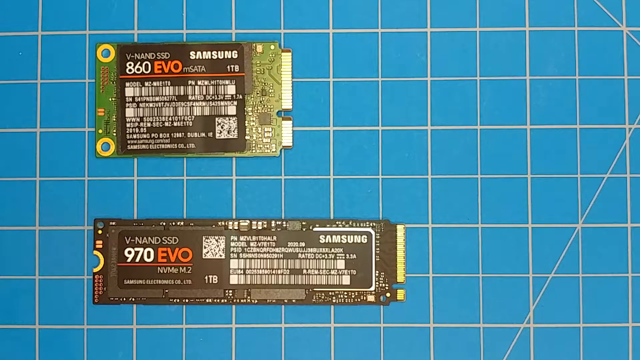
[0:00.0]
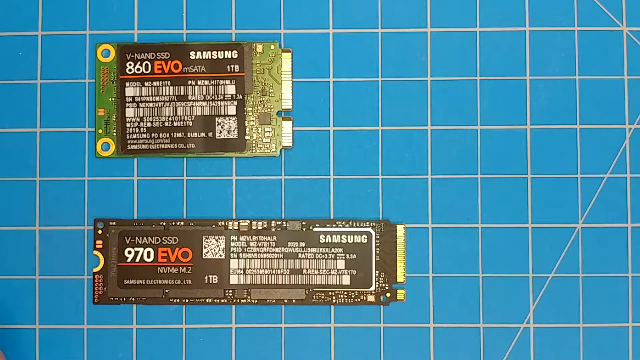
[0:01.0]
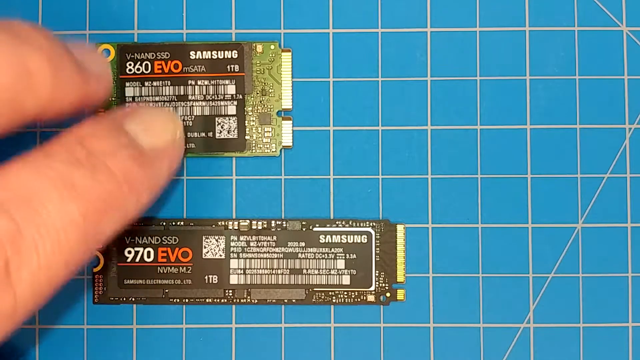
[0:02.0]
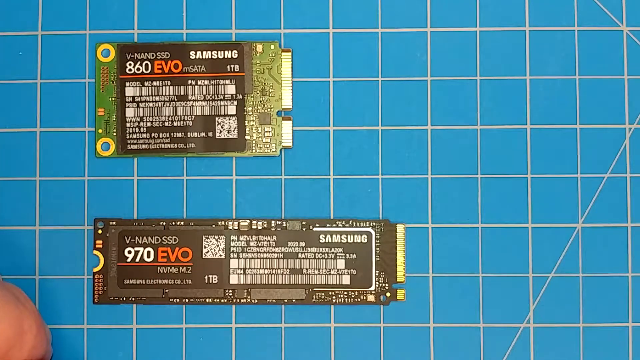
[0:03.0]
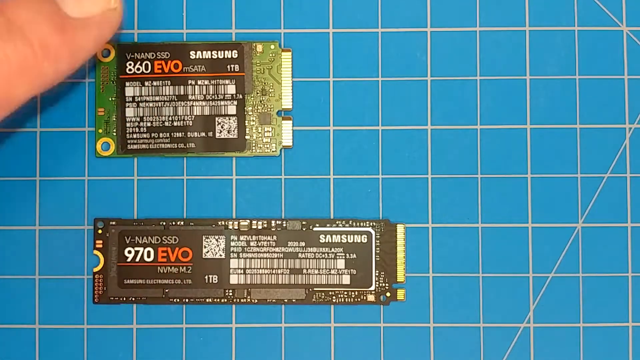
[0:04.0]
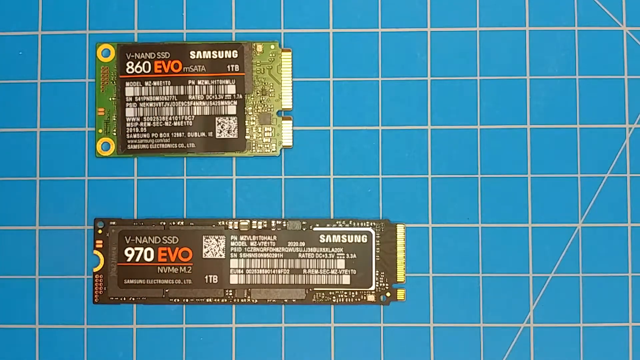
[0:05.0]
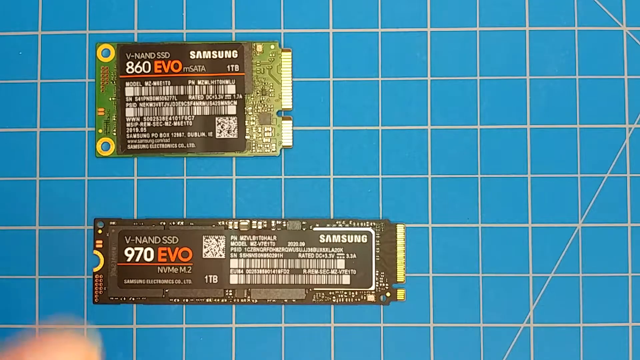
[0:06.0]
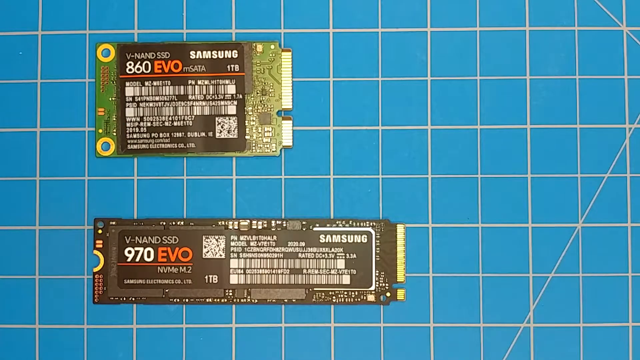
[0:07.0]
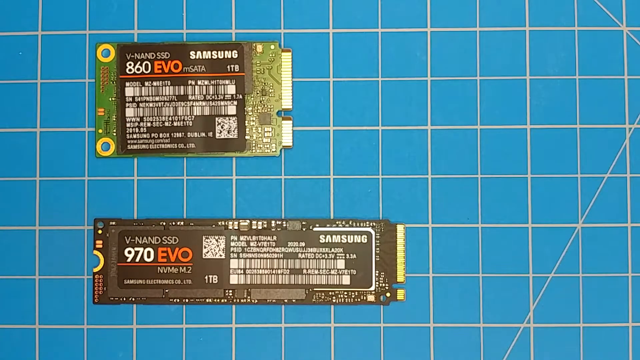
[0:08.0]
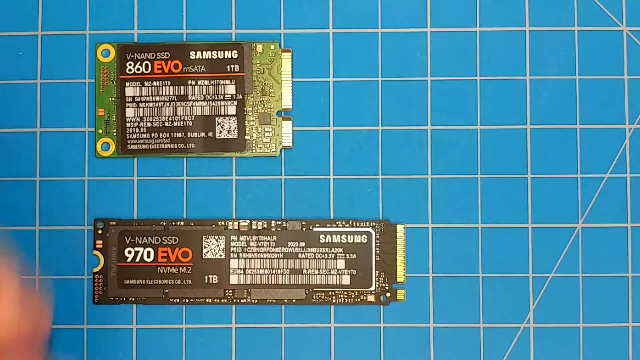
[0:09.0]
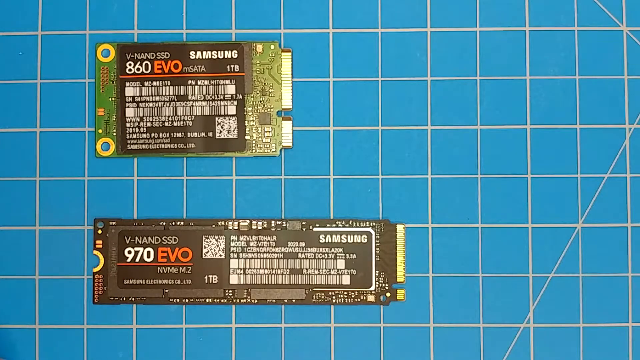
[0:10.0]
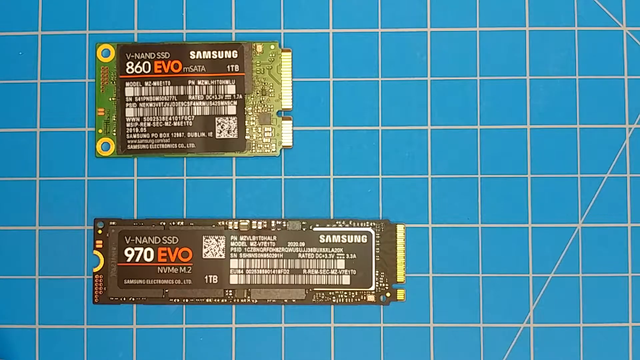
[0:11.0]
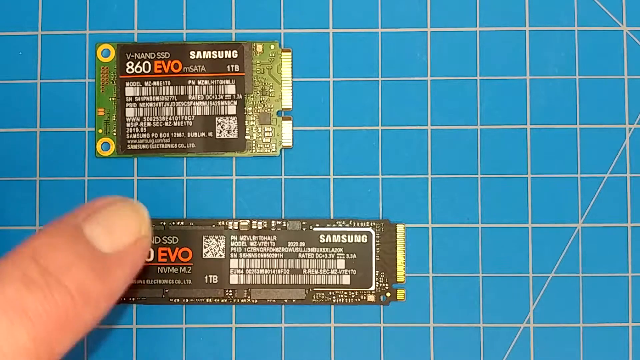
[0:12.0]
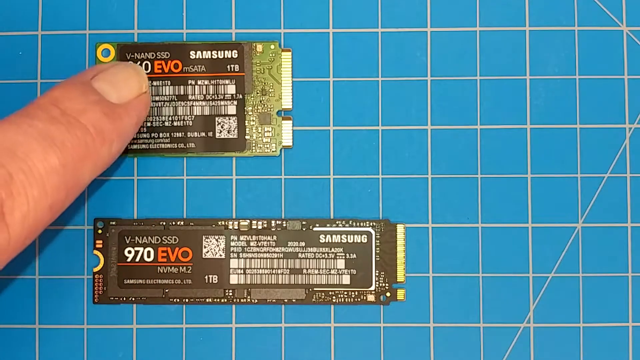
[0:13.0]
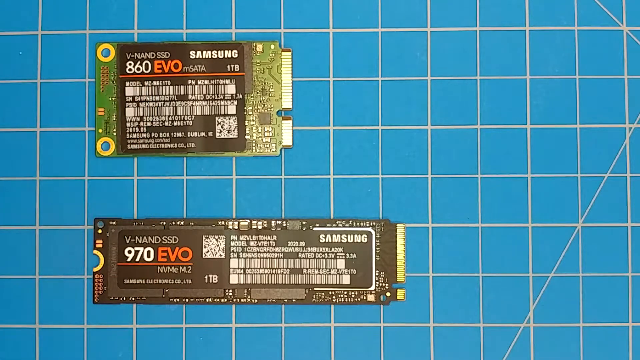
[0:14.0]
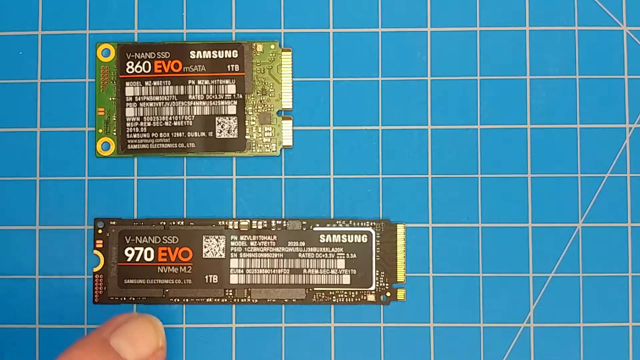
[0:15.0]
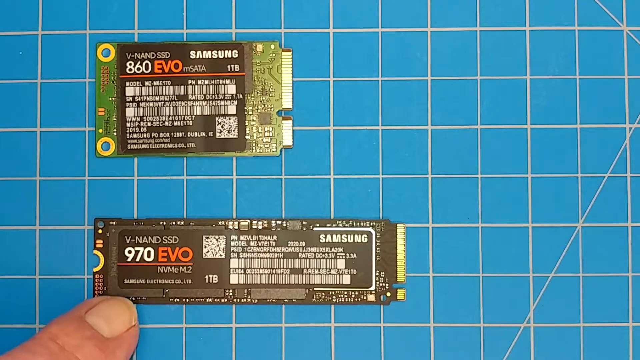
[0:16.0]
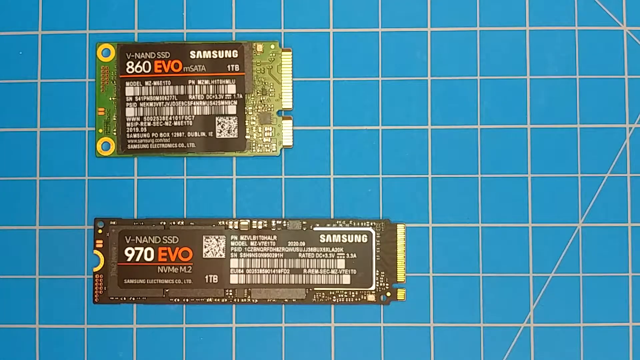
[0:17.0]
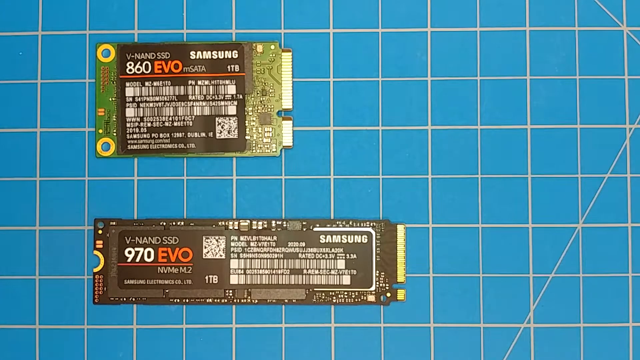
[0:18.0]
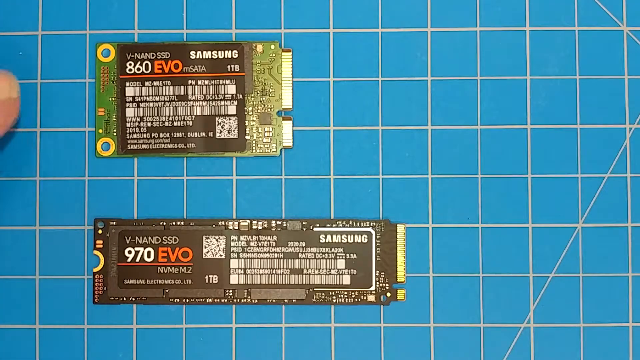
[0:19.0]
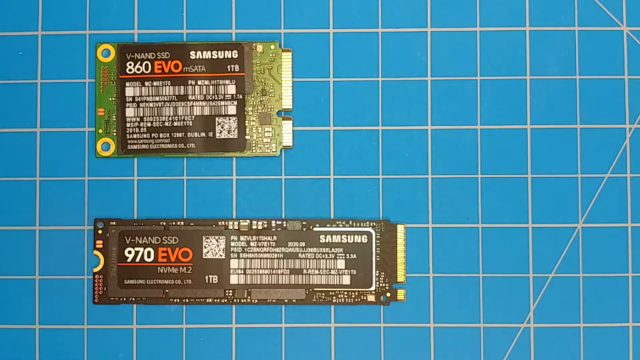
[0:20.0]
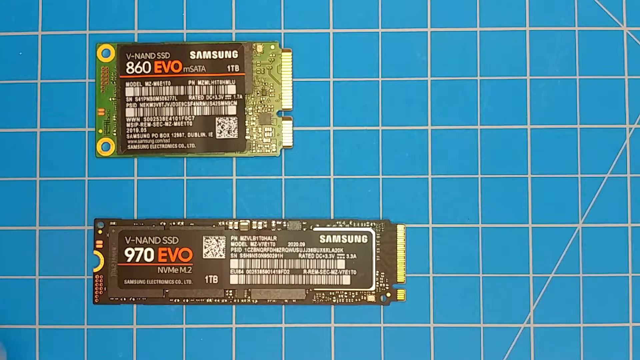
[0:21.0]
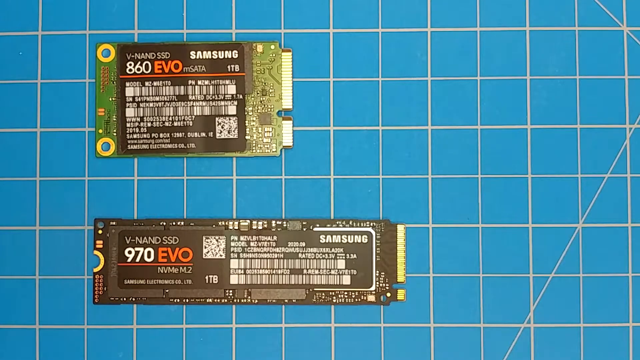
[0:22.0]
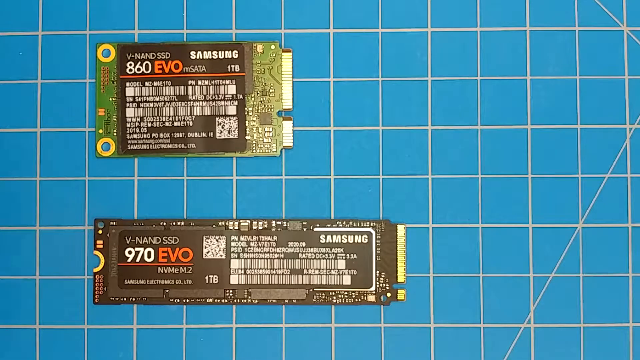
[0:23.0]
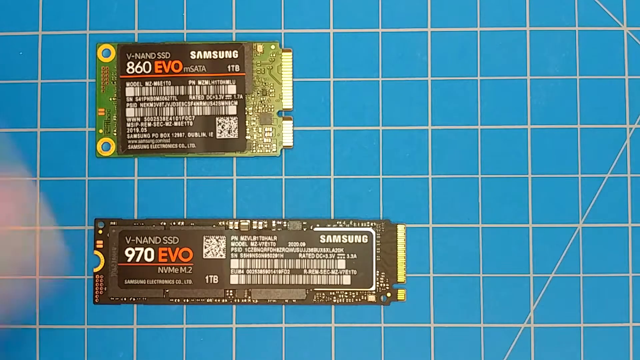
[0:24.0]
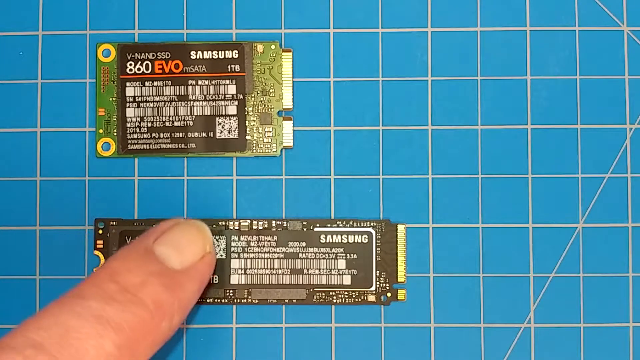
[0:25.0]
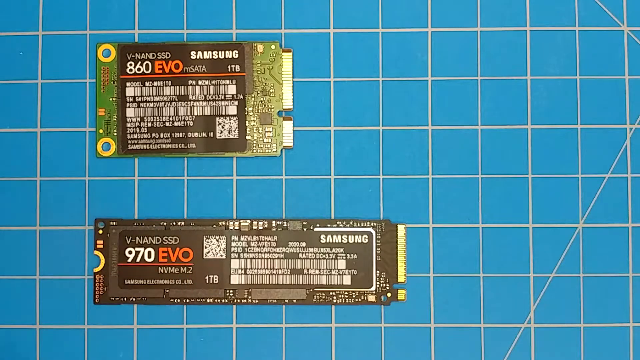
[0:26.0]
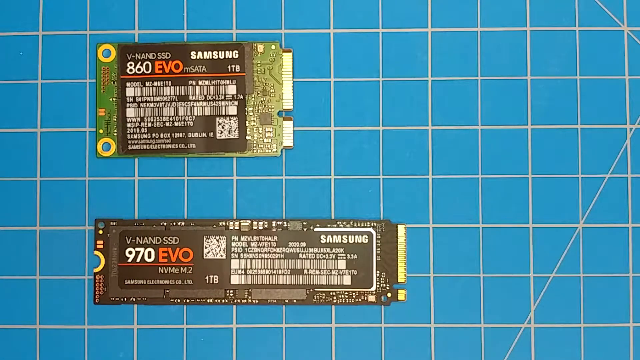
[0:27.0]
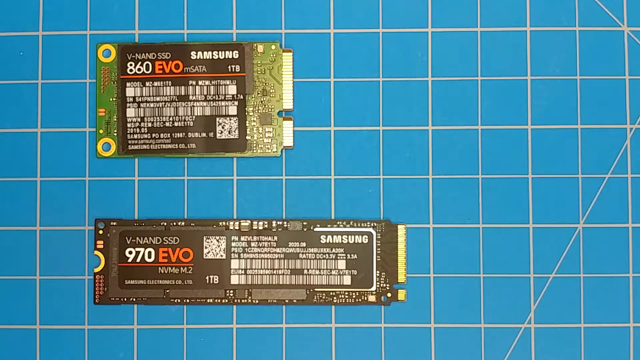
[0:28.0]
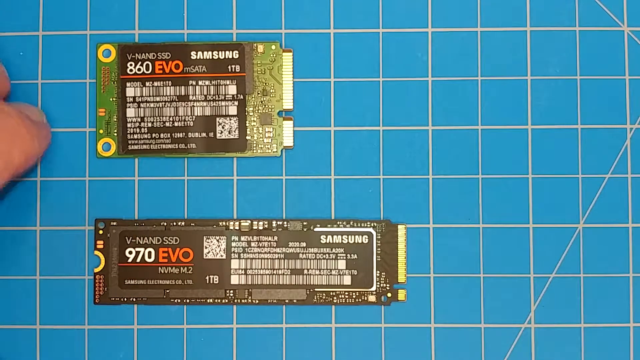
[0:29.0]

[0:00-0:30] Two chips are shown that seem to be made by Samsung, apparently two different models: an 860 EVO and a 970 EVO. The 970 is longer but not as wide. A person briefly waves their hands over them and points to each of them at different times. The shot is a close-up in which the person's finger is seen very up close. The chips have what seem to be serial numbers, but they are hard to make out. There are model numbers; the word "model" can be made out over one of the bars, followed by a number of digits and seemingly a few letters. Both seem to be one terabyte: "1TB" is visible on the right-hand side of the 860 EVO and also on the 970 EVO.